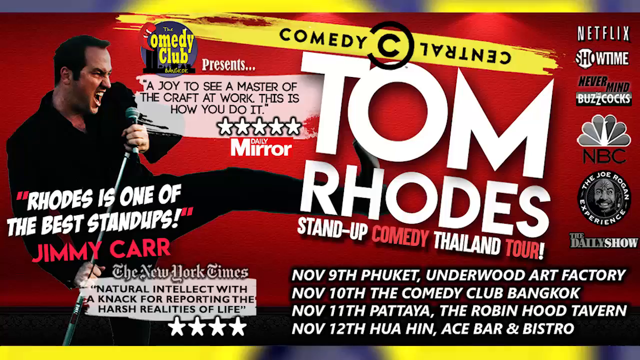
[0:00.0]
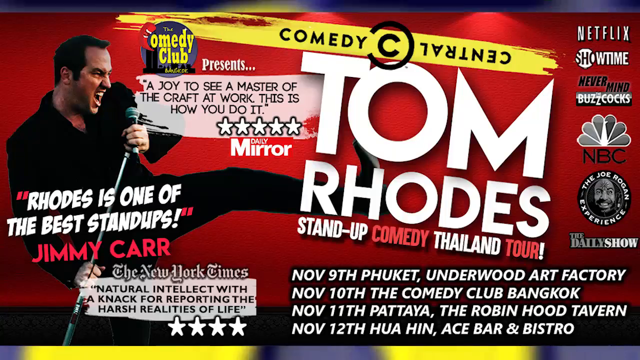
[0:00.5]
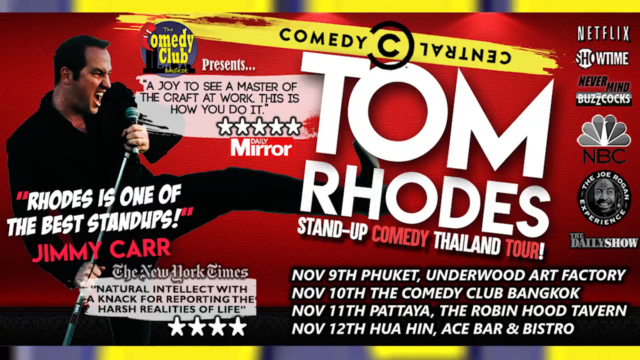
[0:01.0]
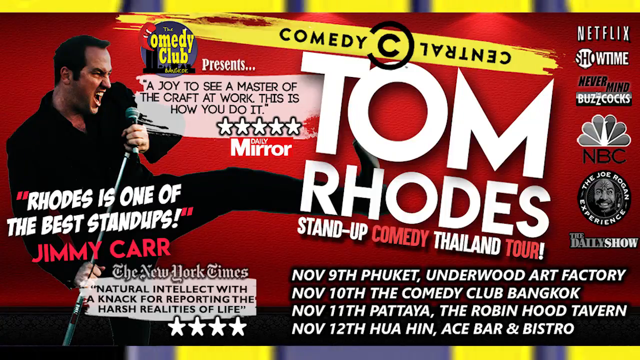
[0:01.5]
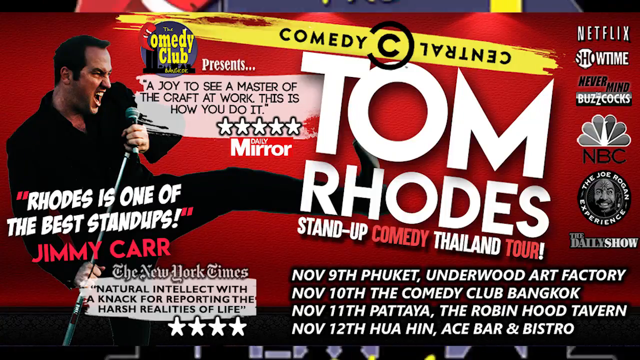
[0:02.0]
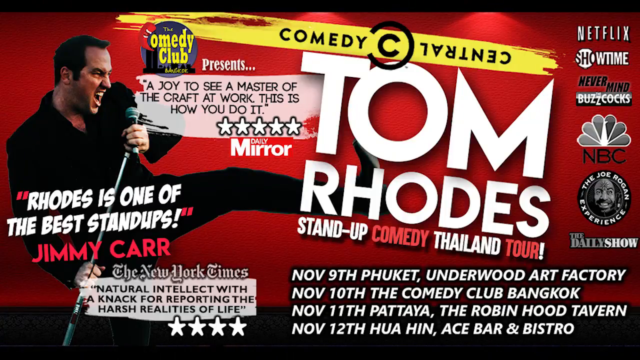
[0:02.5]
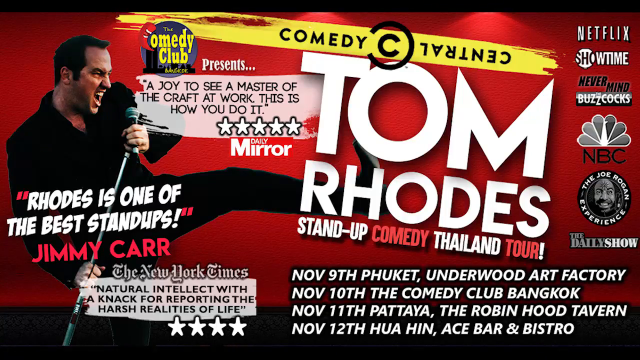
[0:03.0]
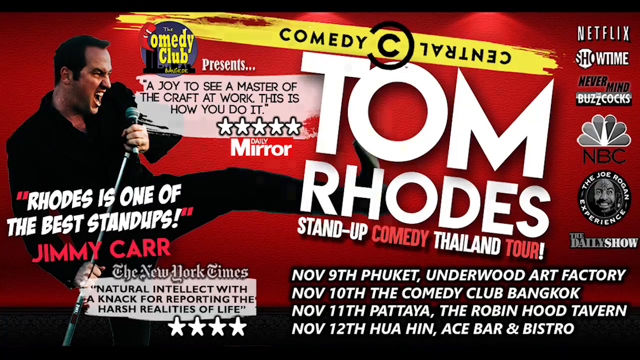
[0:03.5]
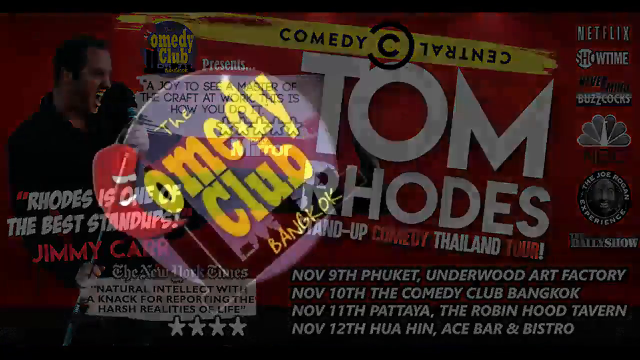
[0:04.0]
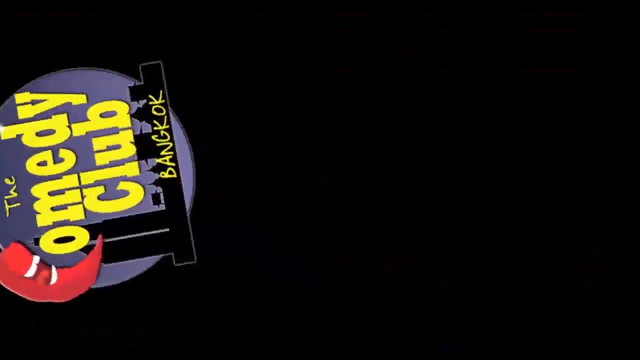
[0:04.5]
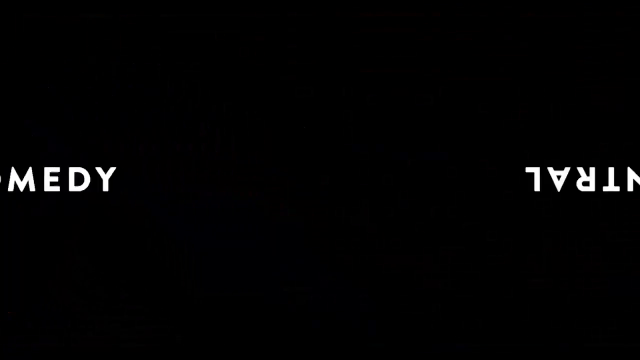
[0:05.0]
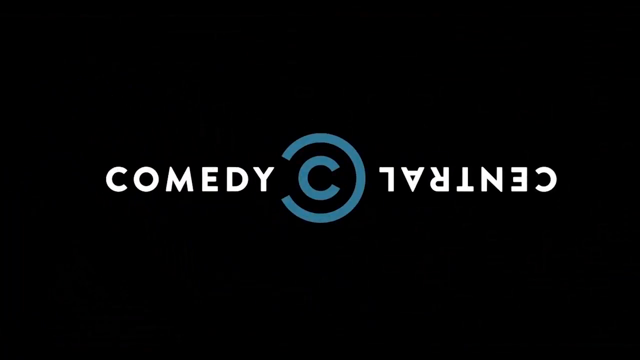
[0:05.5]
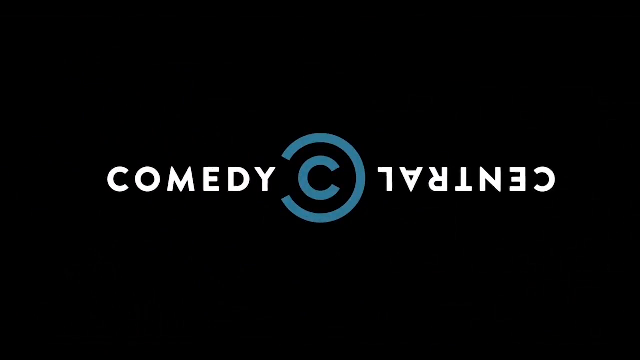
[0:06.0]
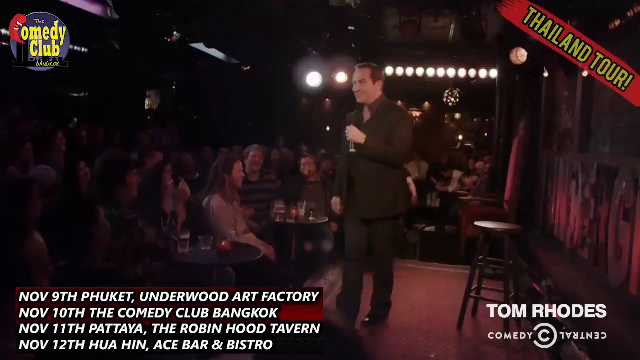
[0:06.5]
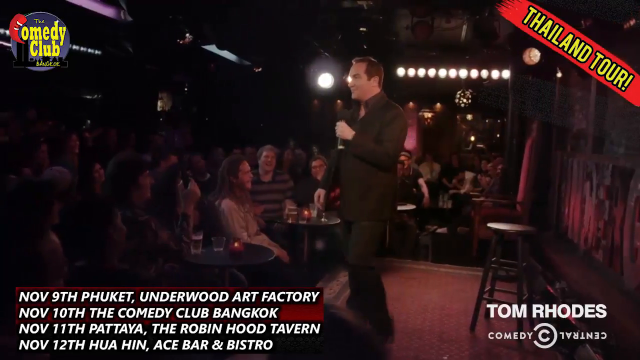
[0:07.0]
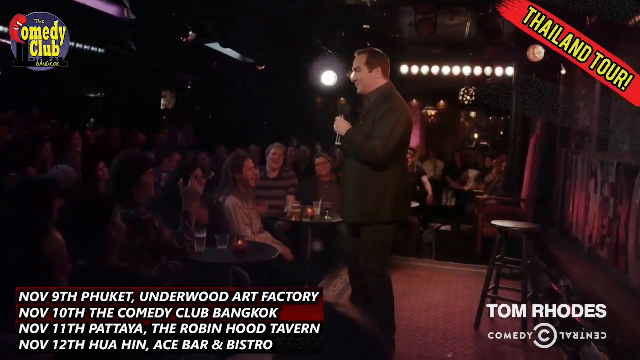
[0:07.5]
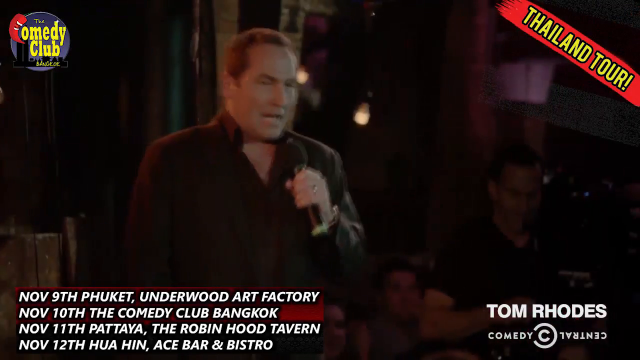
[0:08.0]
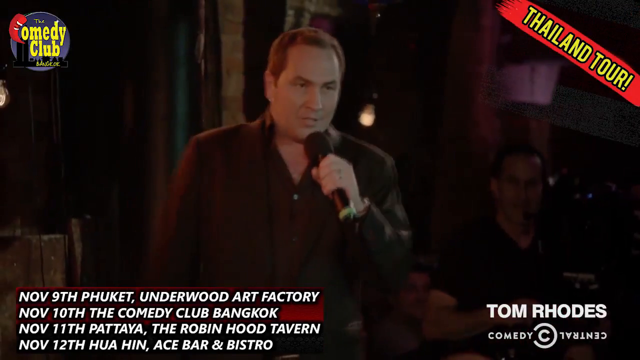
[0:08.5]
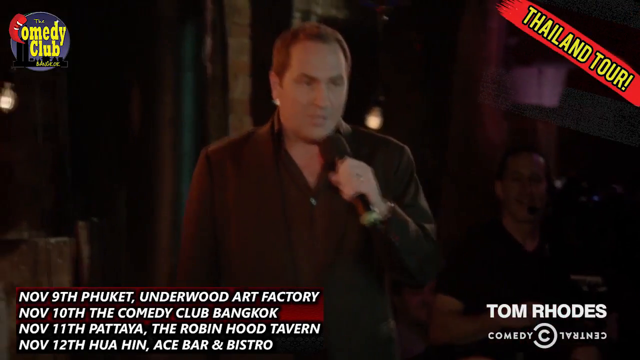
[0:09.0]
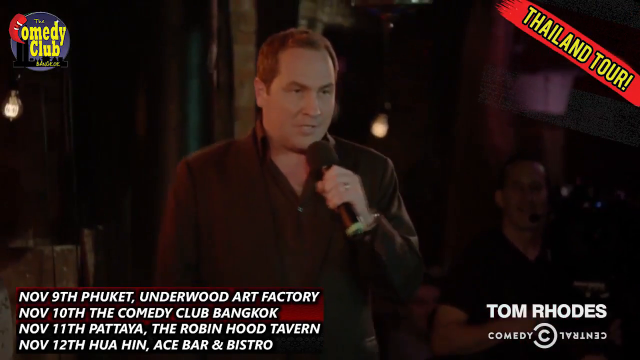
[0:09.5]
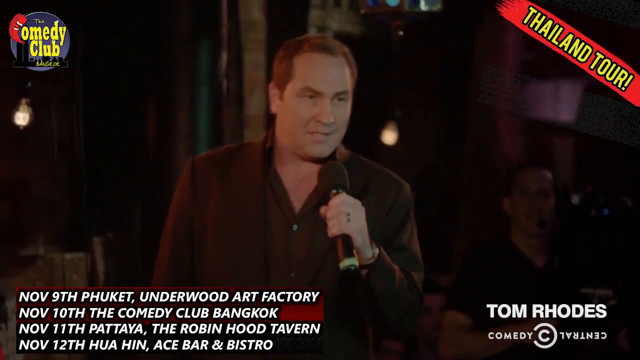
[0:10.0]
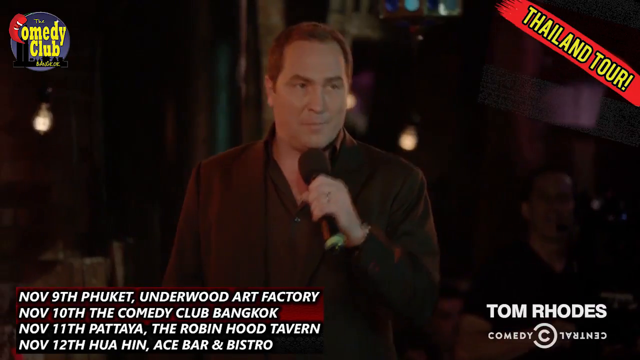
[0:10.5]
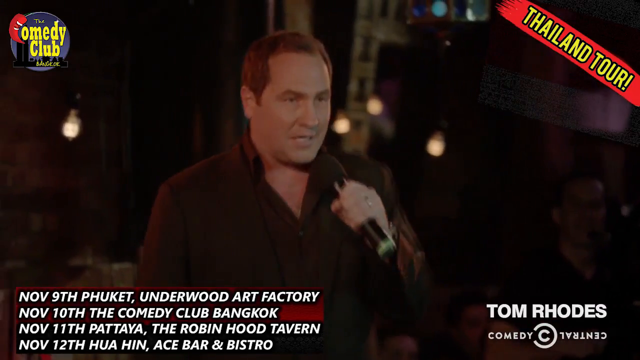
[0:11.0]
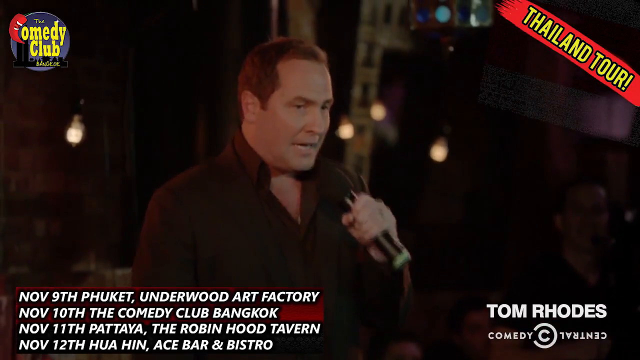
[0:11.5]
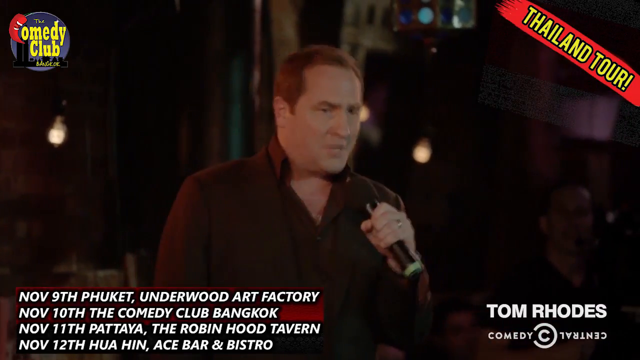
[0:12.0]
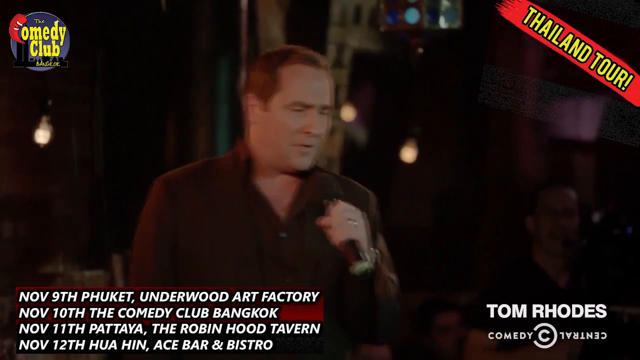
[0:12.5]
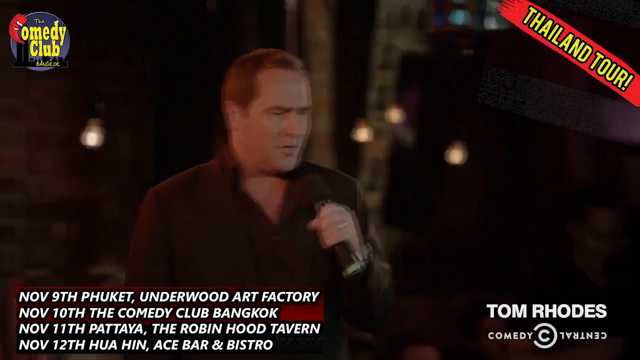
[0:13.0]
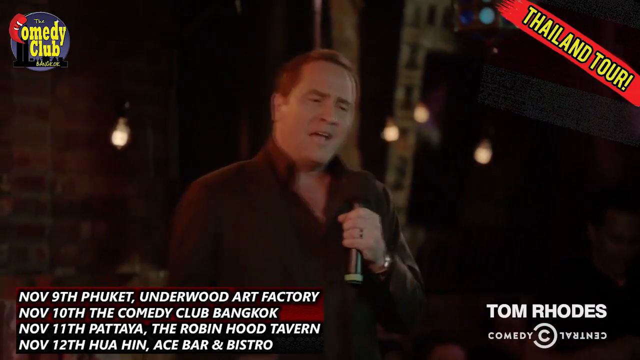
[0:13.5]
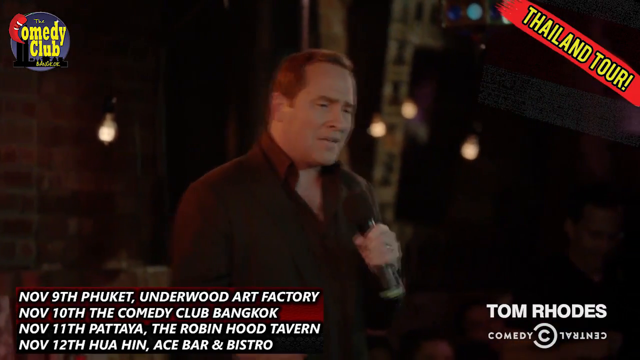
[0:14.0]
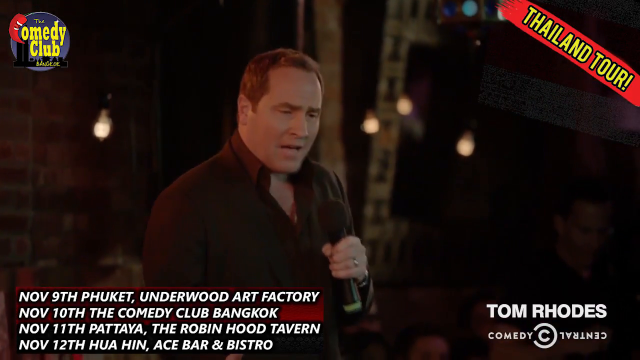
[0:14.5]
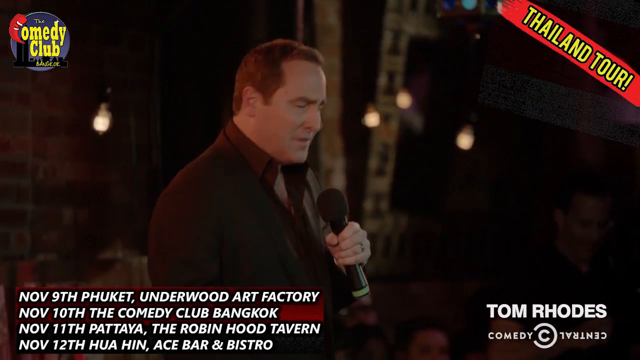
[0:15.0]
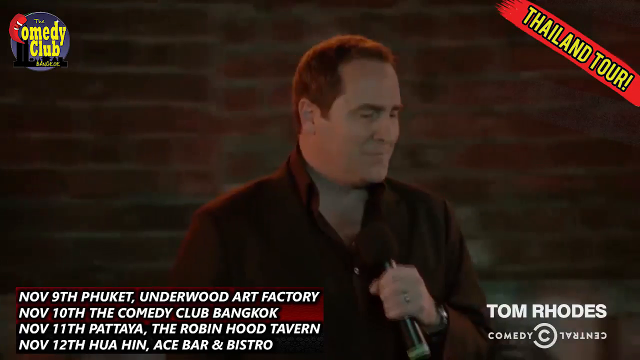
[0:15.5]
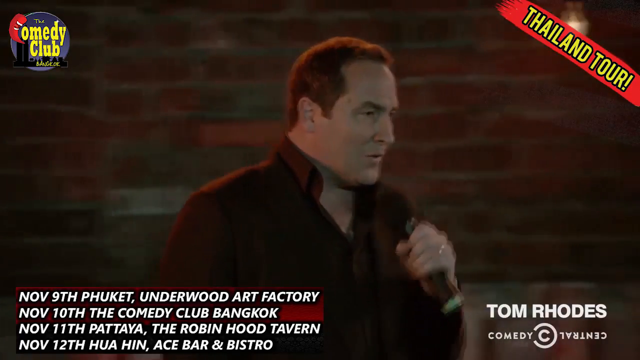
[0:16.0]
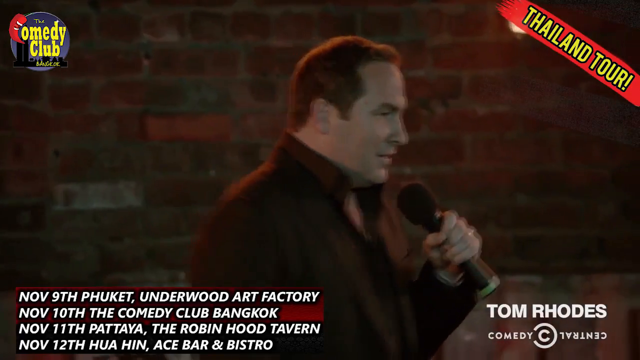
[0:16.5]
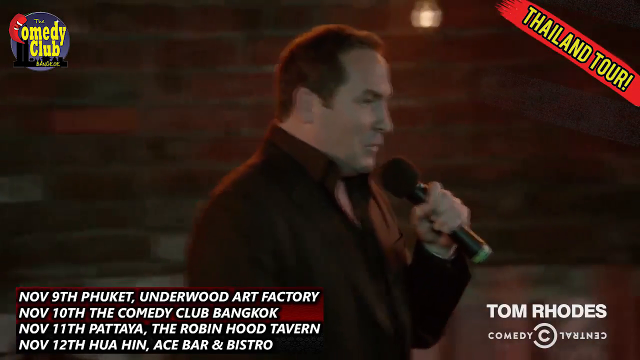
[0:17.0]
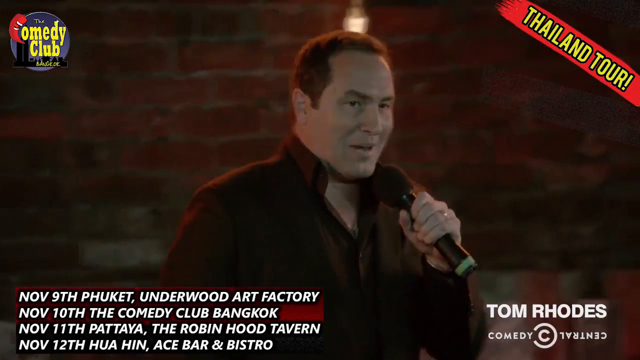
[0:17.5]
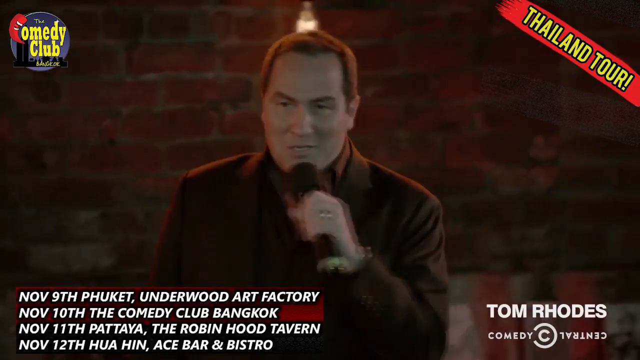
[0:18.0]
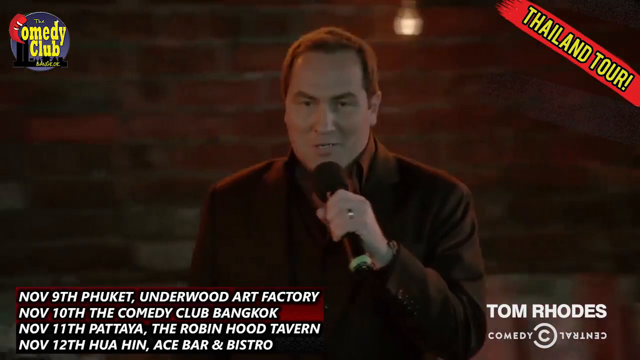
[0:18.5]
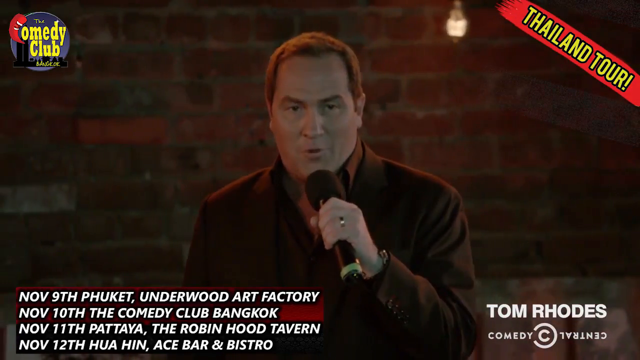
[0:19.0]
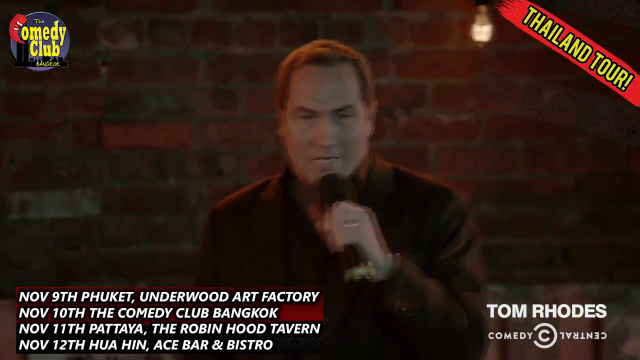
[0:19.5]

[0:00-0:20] A man who is apparently on a tour in Thailand appears at the start of the video. His name is Tom Rhodes, and he is a comedian. The dates on which he will perform on stage are shown along with the names of the places: on November 9th under wood at the factory, on November 10 at Club Bangkok, on November 11th at Robin Hood, a tavern, and another performance on the 12th. The man holds a mic and is standing. No audience is visible, but he seems to be talking to people.